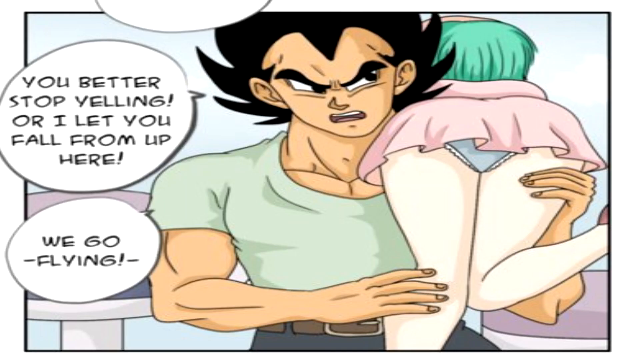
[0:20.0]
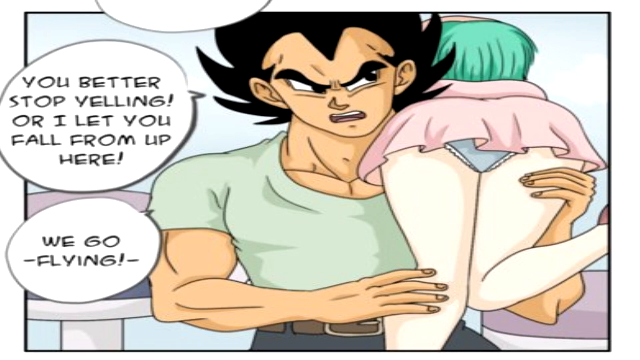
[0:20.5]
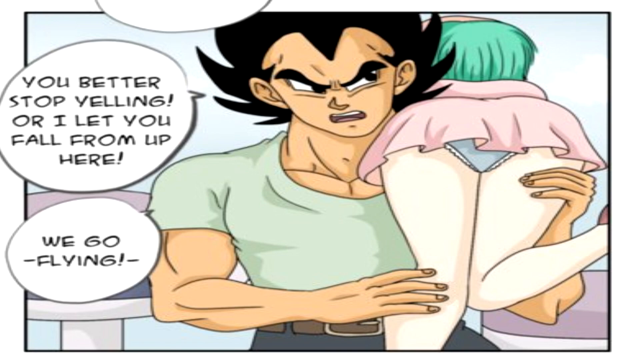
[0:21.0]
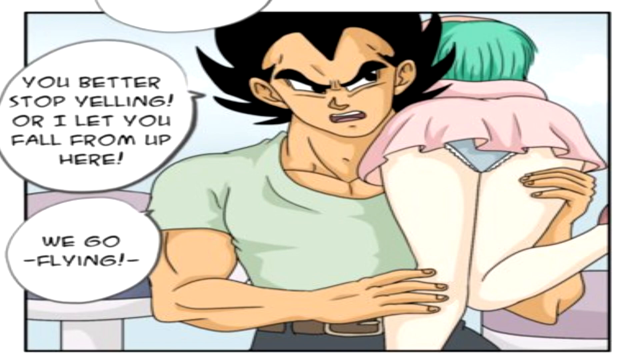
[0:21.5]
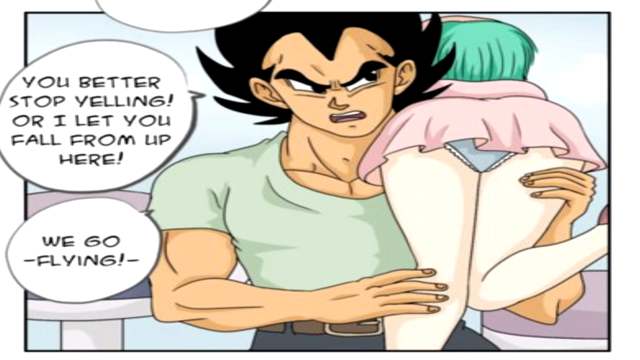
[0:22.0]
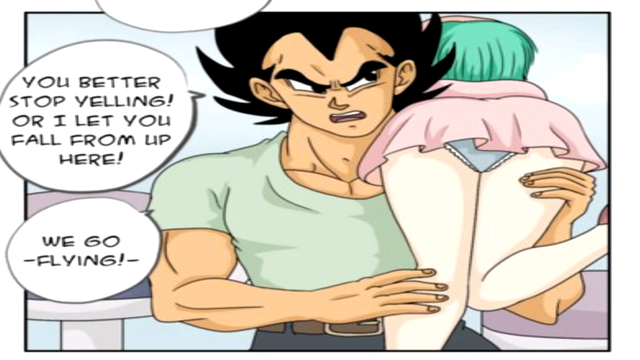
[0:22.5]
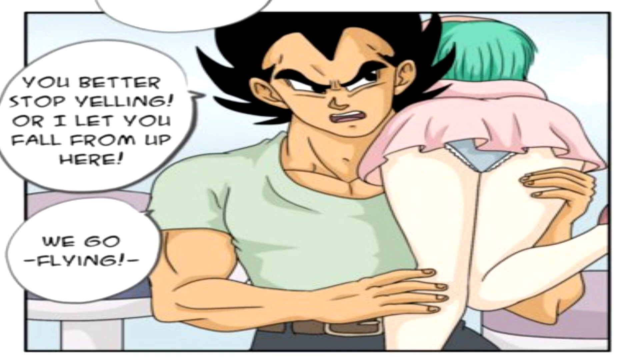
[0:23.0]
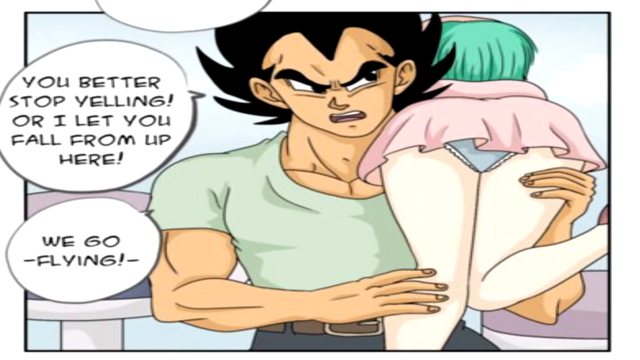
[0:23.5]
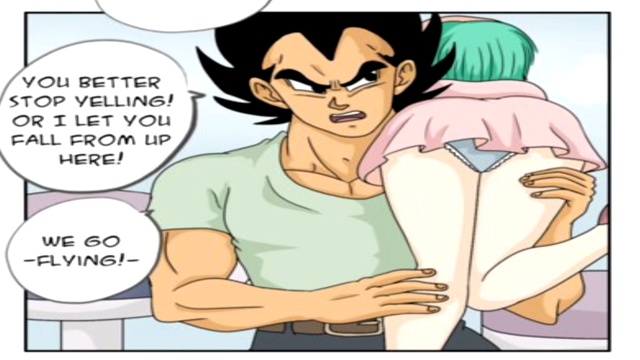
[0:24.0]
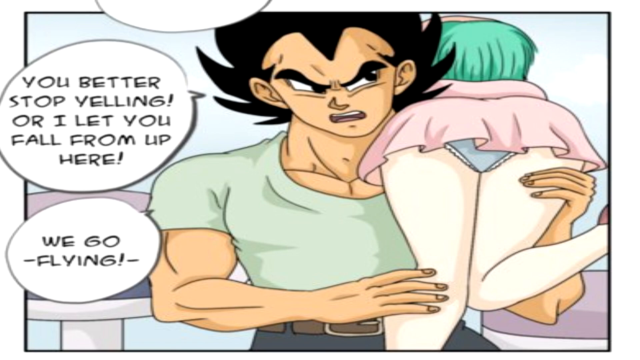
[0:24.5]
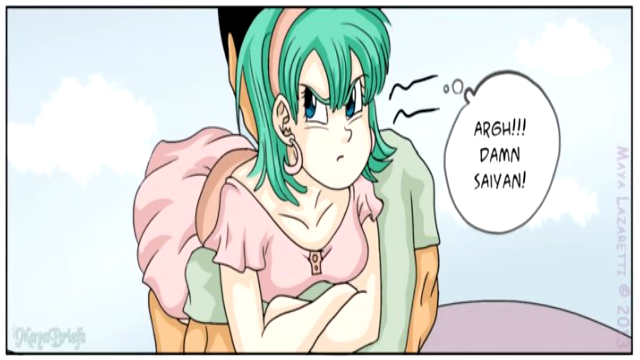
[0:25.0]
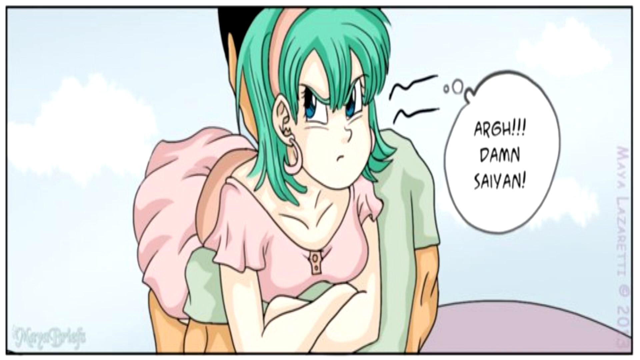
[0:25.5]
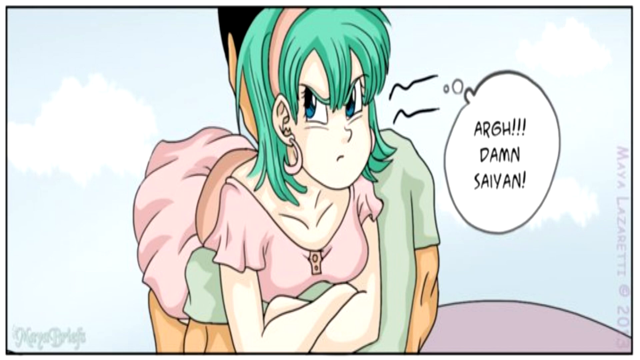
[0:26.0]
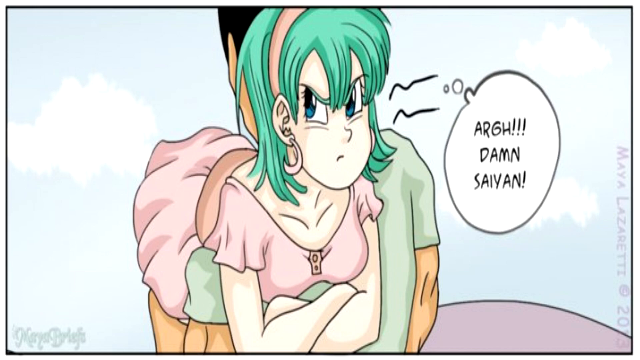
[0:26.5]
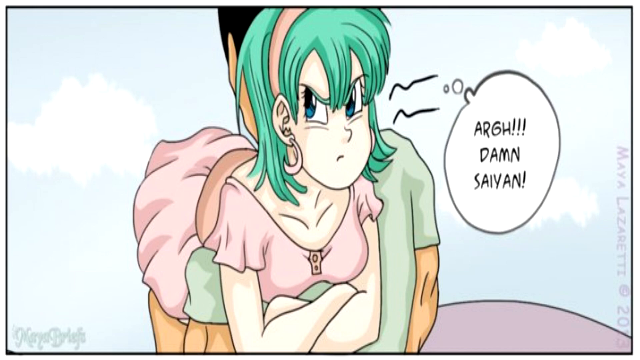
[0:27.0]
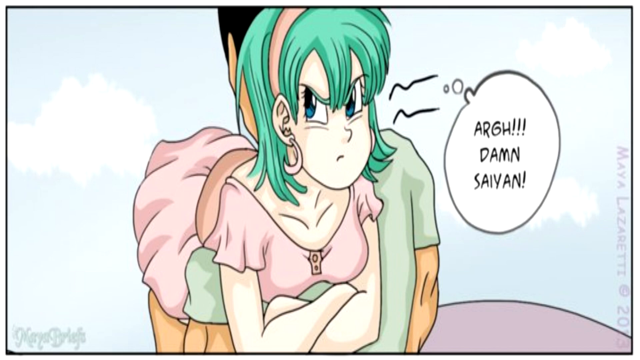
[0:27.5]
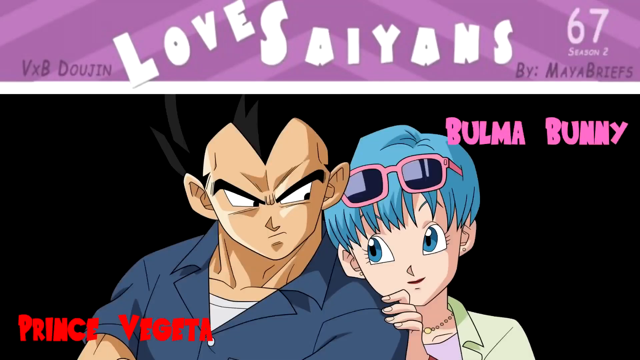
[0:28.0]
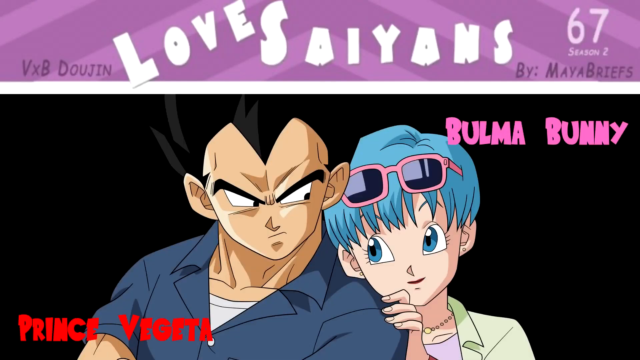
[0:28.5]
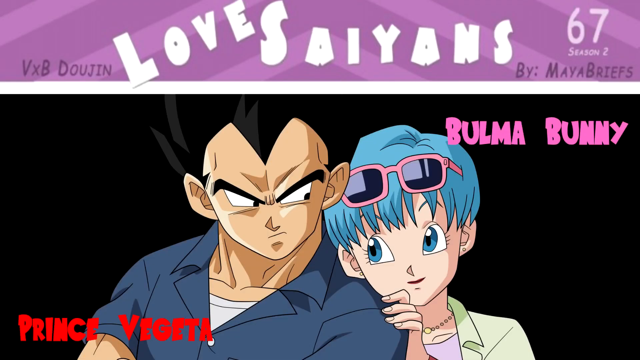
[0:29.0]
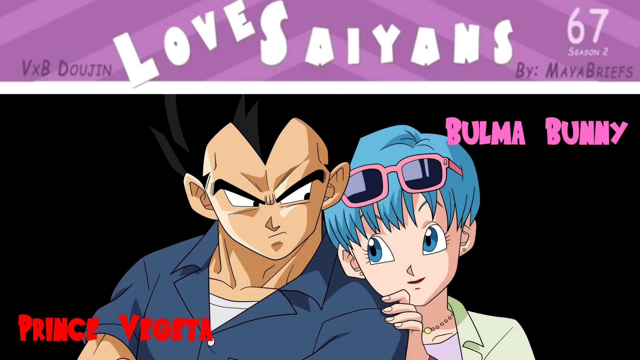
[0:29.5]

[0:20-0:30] The man is carrying the woman on his shoulders, apparently tired of waiting in the long queue of cars and wanting to fly. A speech bubble says "you better stop yelling or I'll let you fall from up here." The woman is very much annoyed by the man. The words "Prince Vegeta" are written in red and "Balma Bunny" in purple, and a caption at the top reads "love saiyans."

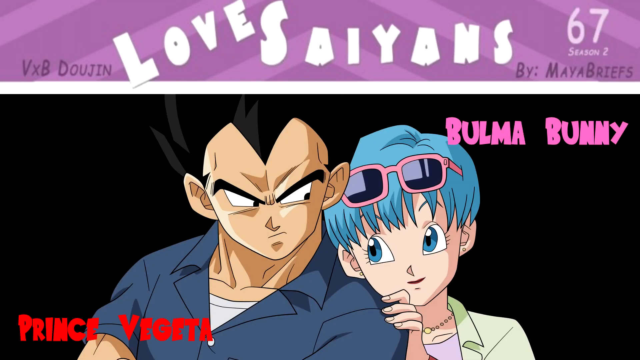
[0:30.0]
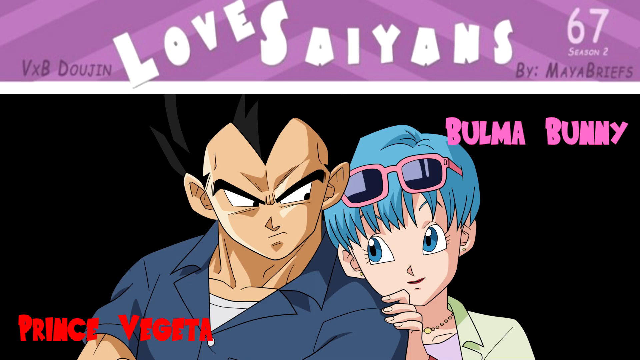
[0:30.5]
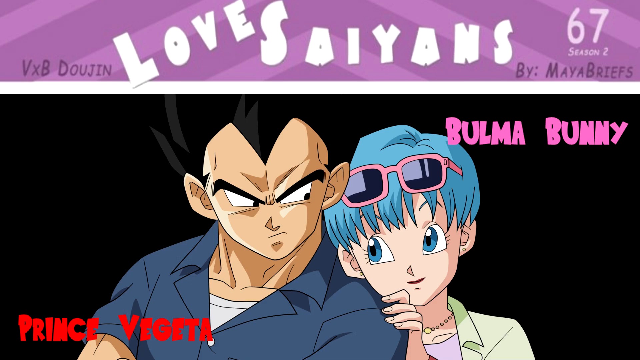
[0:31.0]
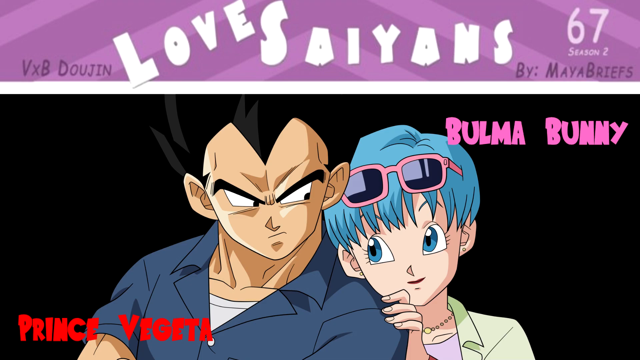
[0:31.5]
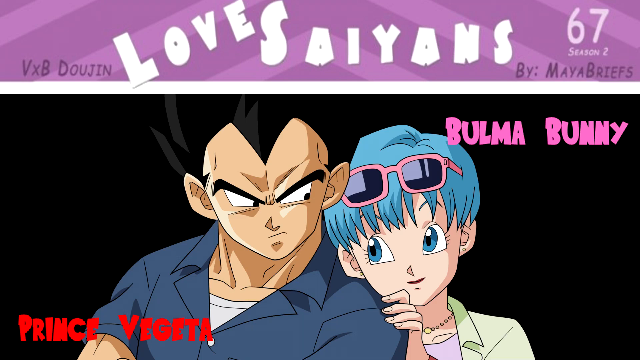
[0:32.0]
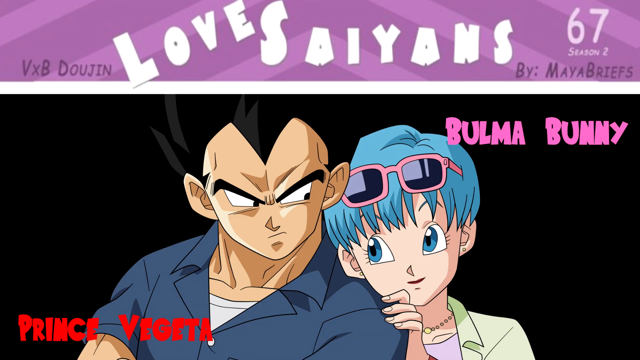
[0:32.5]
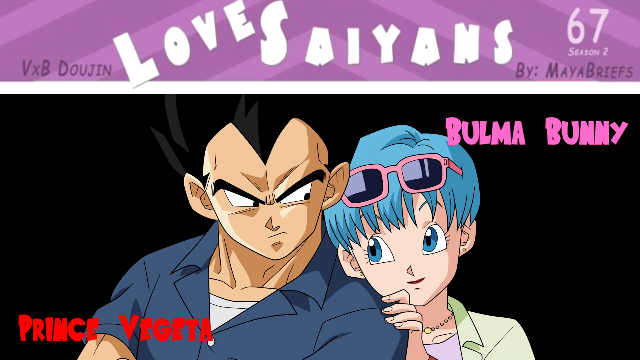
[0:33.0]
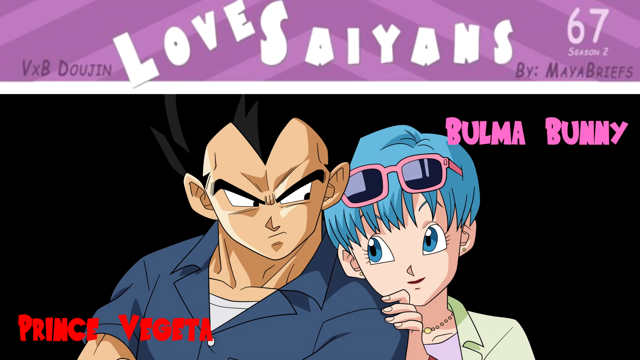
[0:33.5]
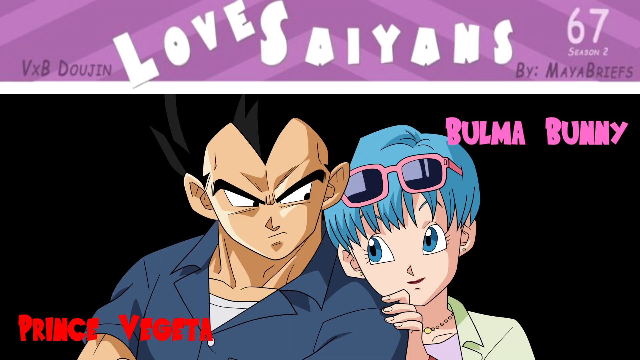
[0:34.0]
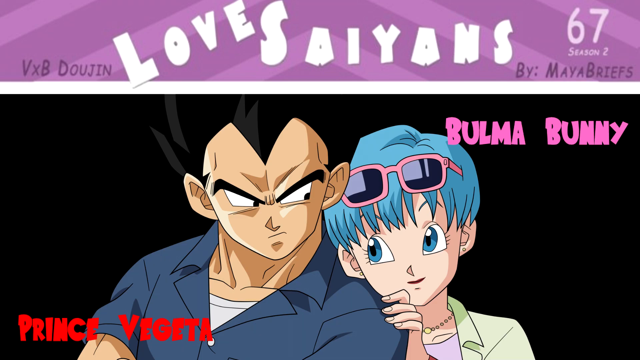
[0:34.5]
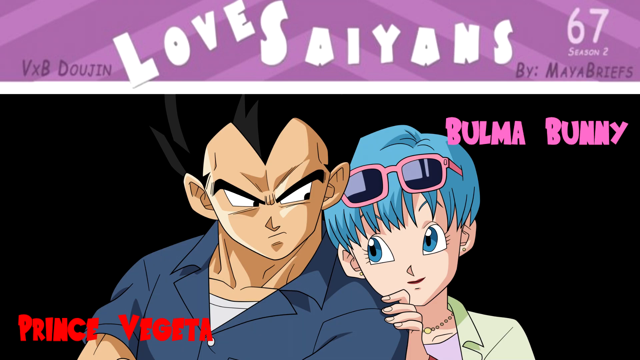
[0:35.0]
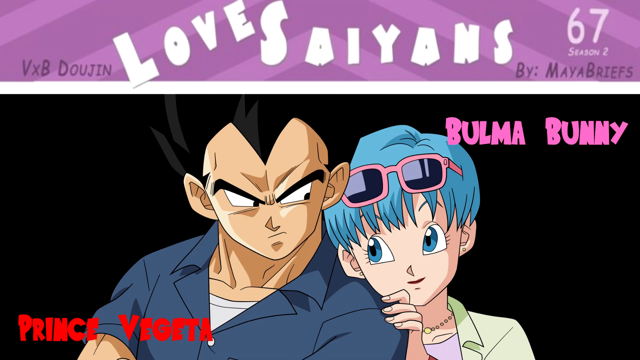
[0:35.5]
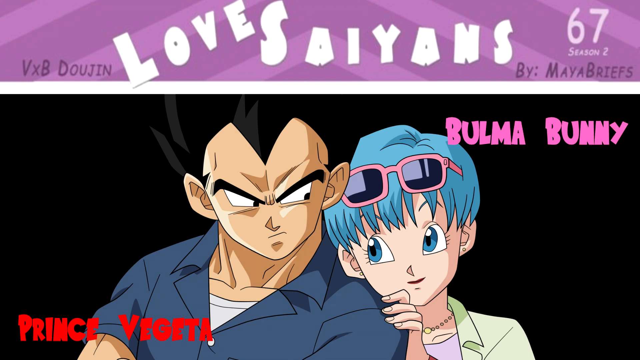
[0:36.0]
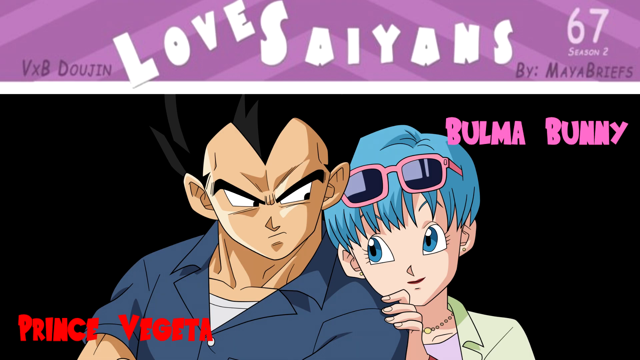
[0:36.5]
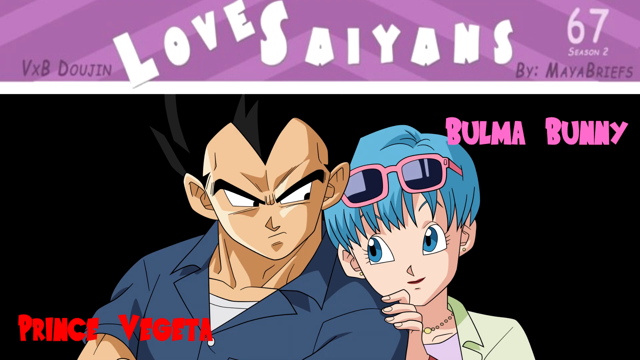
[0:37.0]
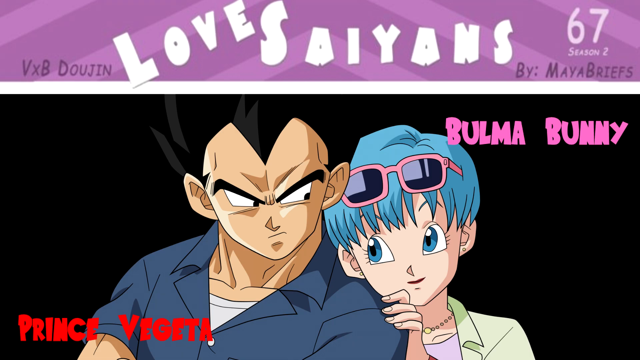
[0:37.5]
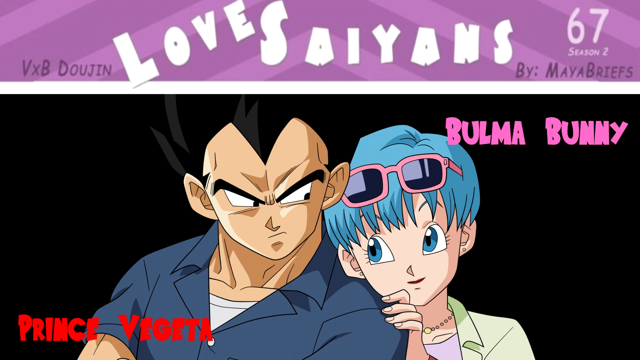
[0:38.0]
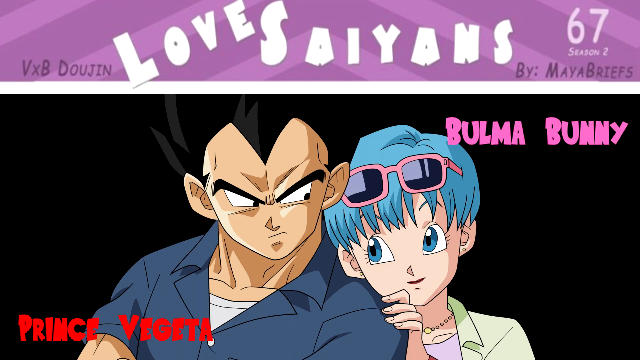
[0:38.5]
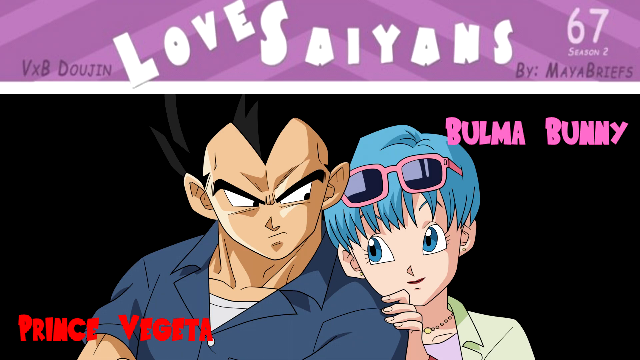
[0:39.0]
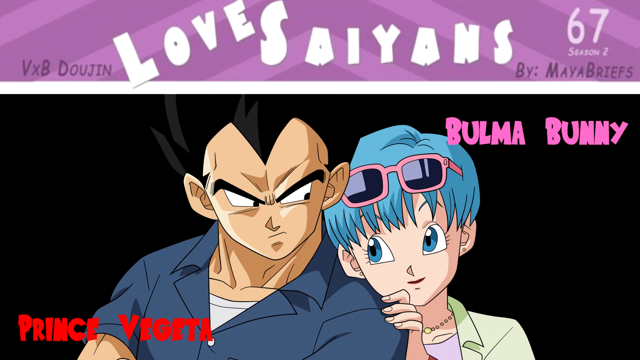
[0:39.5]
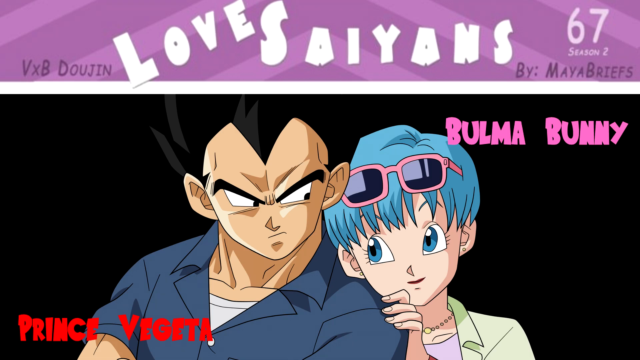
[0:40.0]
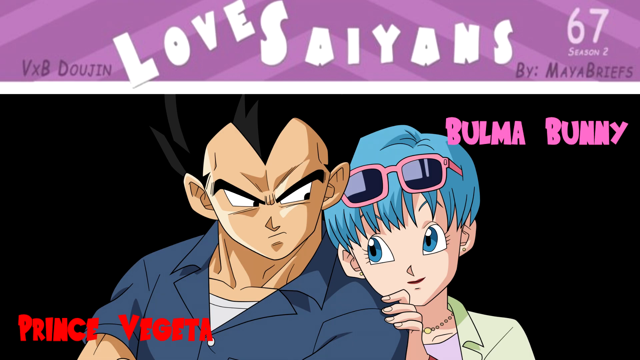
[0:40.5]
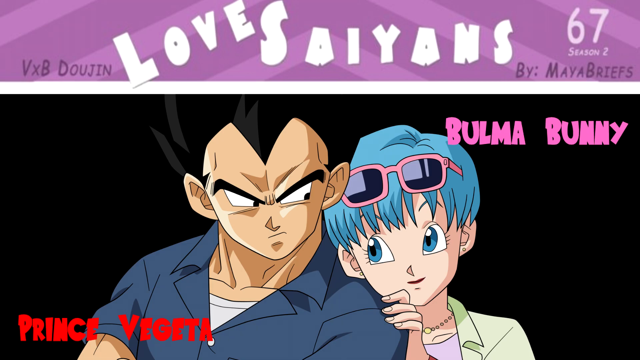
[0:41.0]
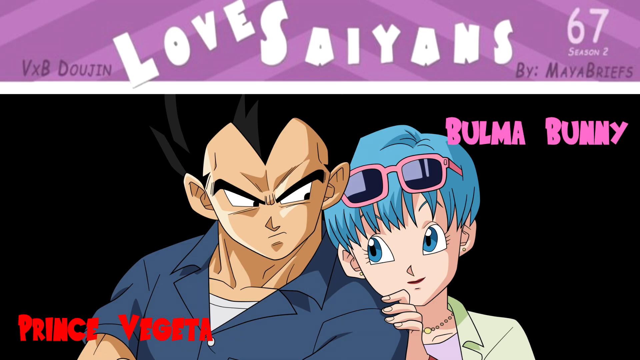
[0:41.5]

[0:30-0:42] The two character names "Balma Bunny" and "Prince Vegeta" are written on screen. A young female and a young male cartoon character appear; the female, who has blue hair and pink and black shades on her head, is leaning towards the male and looking at him, seemingly with adoration and love in her eyes. The male appears to be Prince Vegeta and the female Balma Bunny, and given the words "love saiyans" they seem to be a couple.